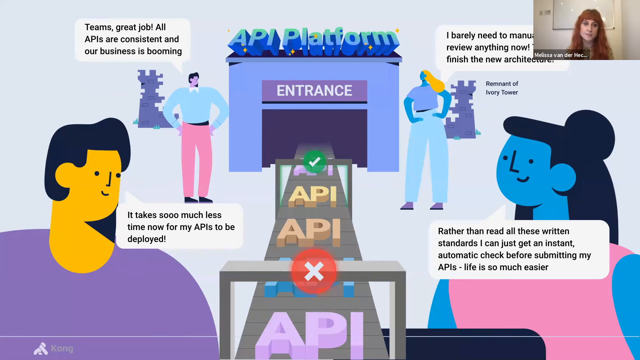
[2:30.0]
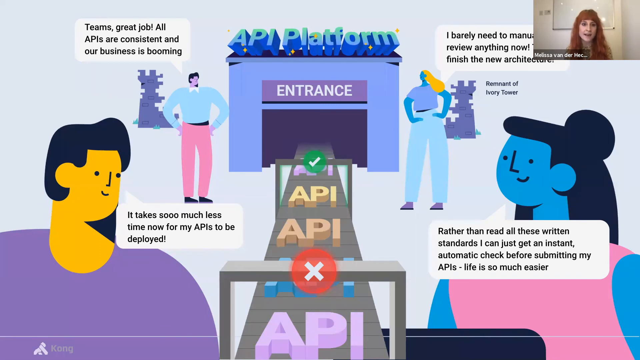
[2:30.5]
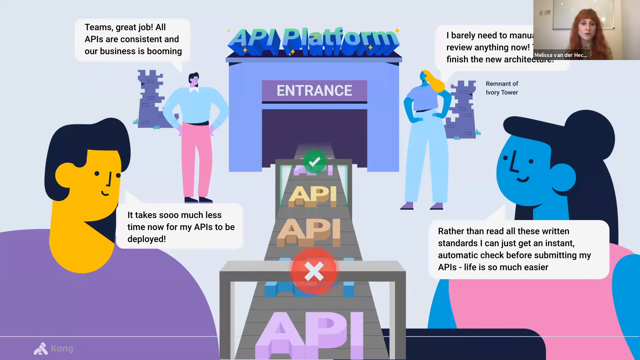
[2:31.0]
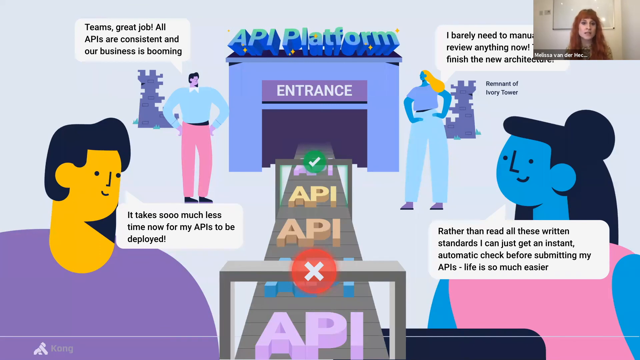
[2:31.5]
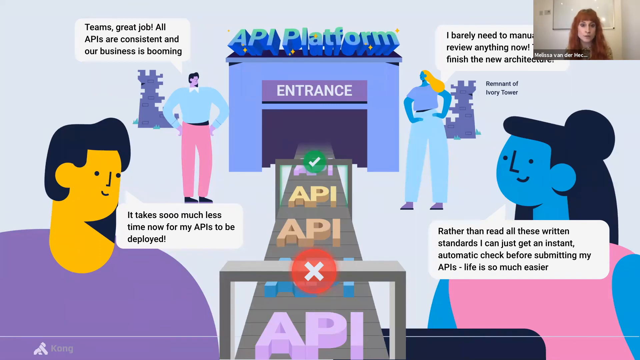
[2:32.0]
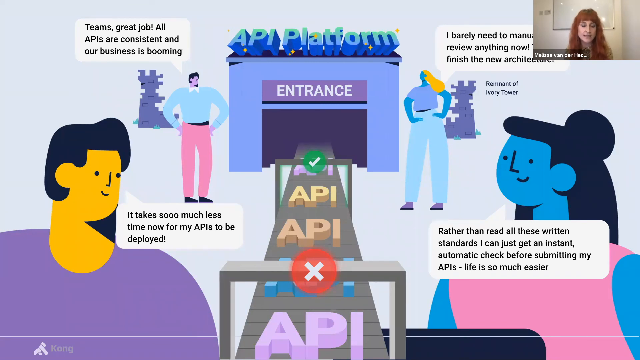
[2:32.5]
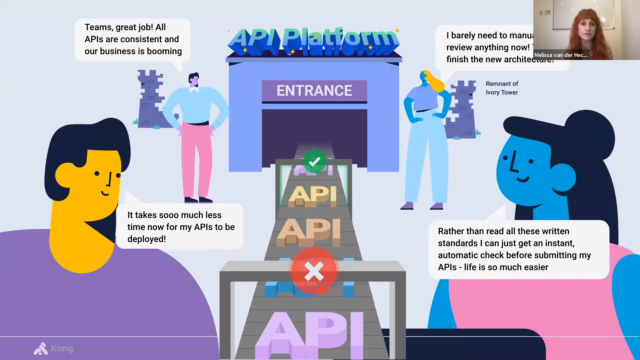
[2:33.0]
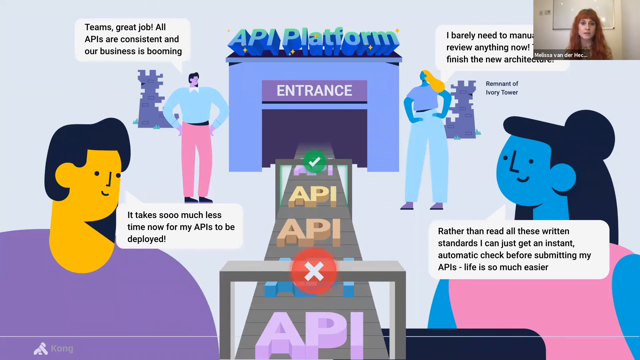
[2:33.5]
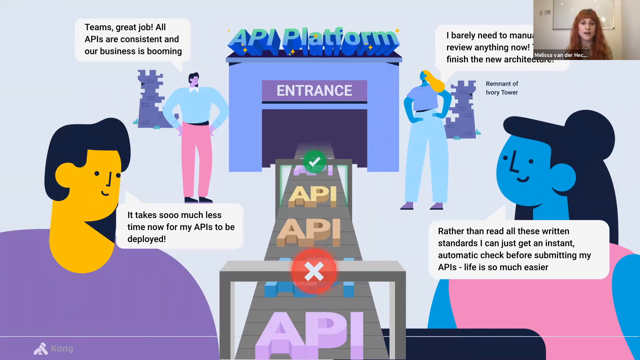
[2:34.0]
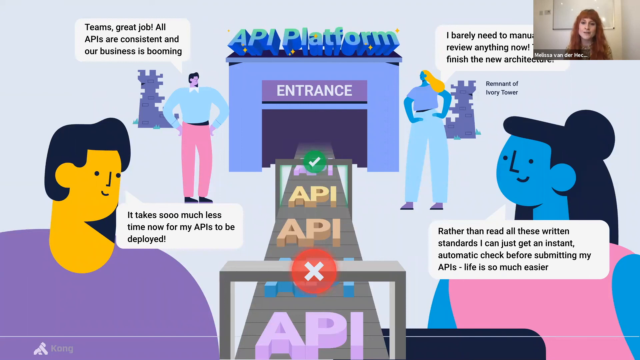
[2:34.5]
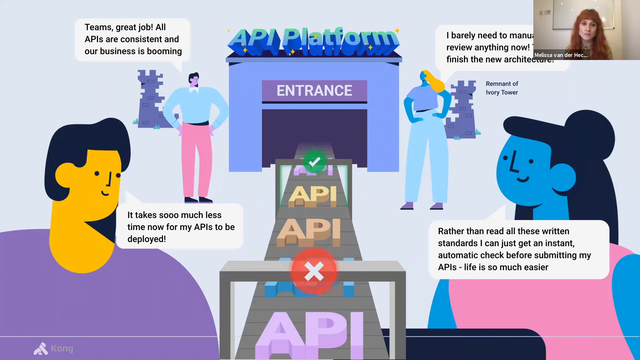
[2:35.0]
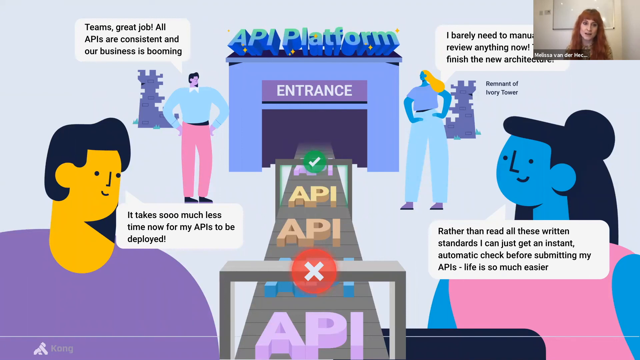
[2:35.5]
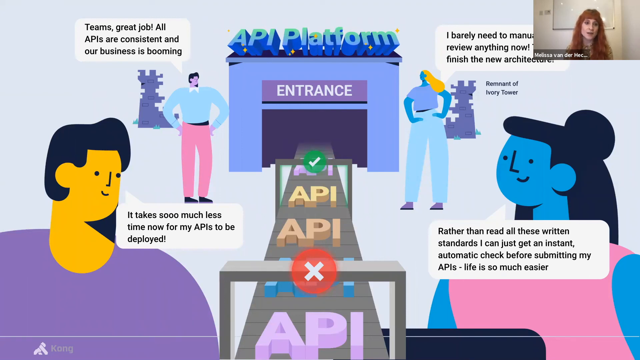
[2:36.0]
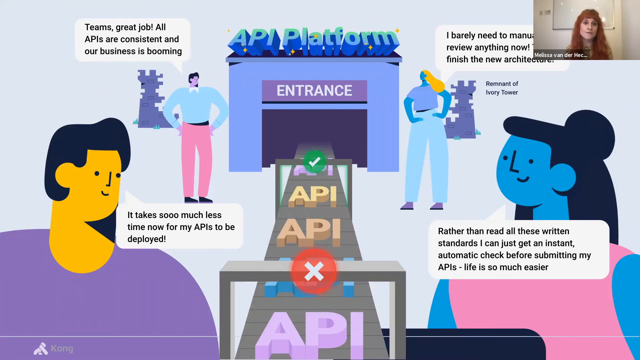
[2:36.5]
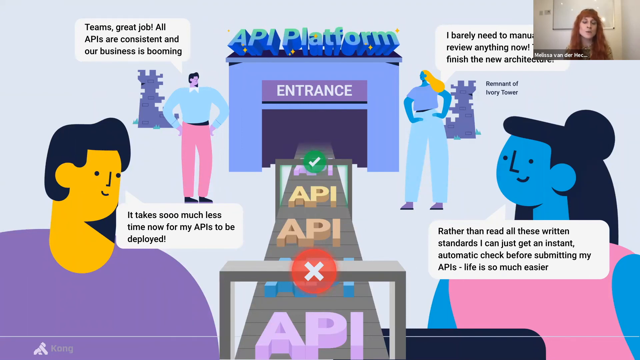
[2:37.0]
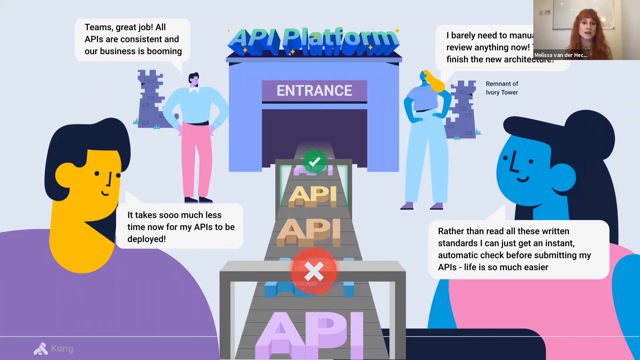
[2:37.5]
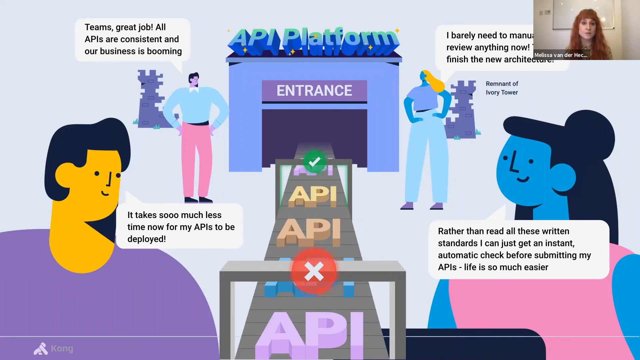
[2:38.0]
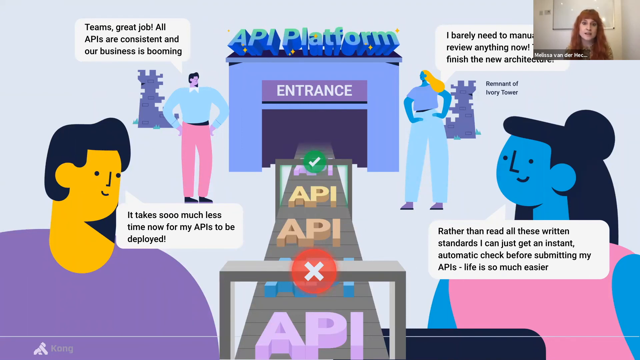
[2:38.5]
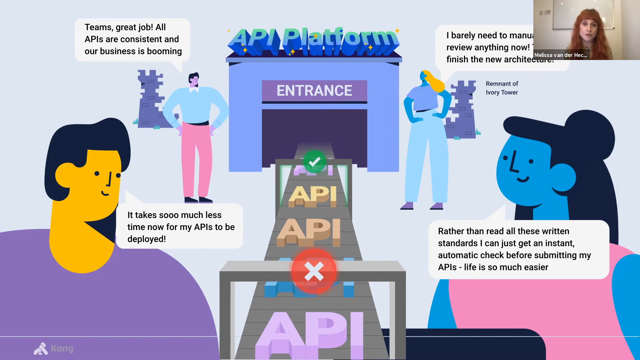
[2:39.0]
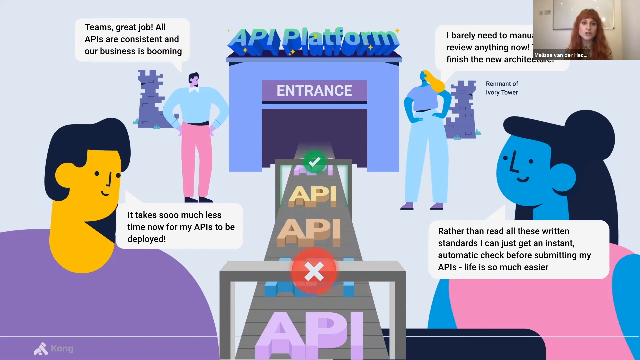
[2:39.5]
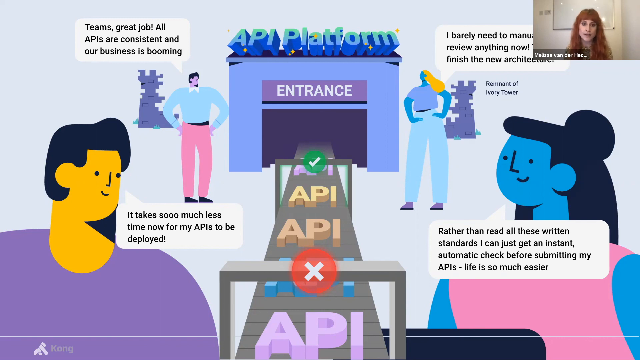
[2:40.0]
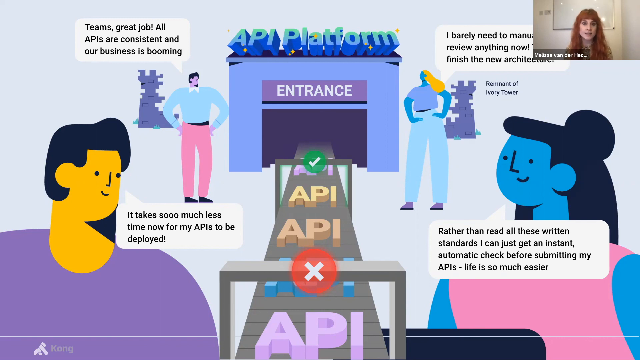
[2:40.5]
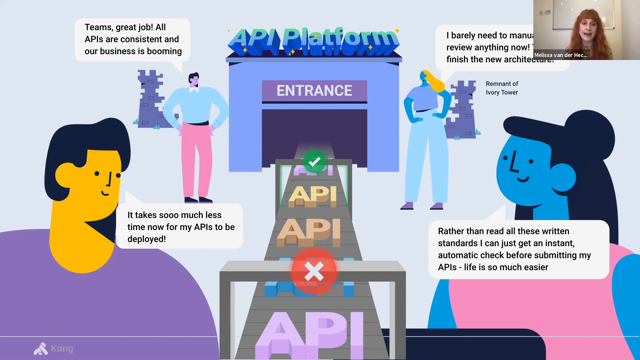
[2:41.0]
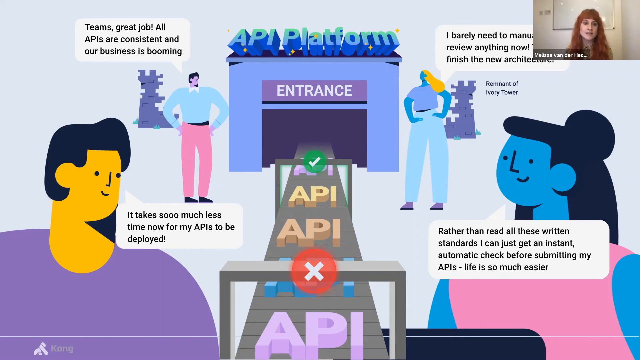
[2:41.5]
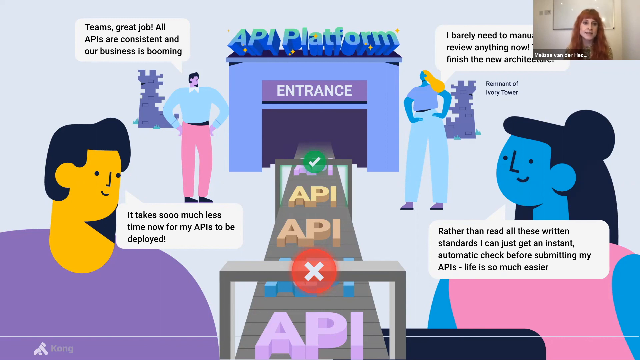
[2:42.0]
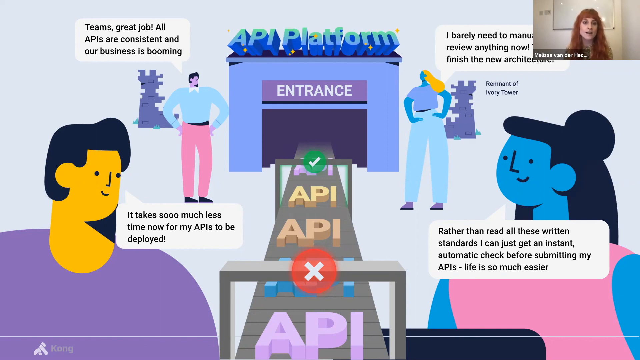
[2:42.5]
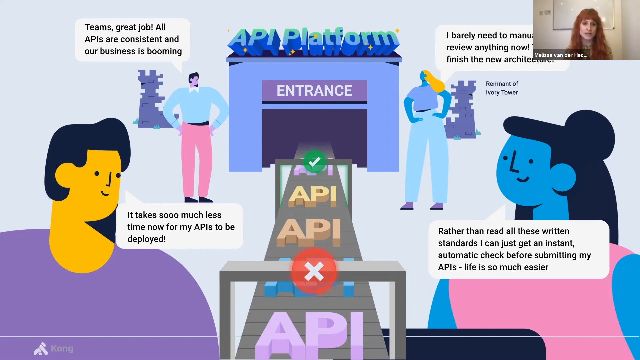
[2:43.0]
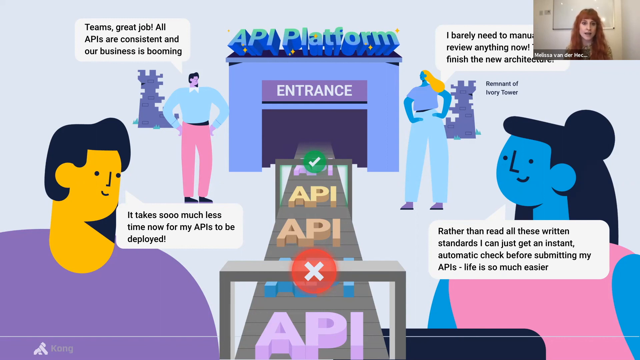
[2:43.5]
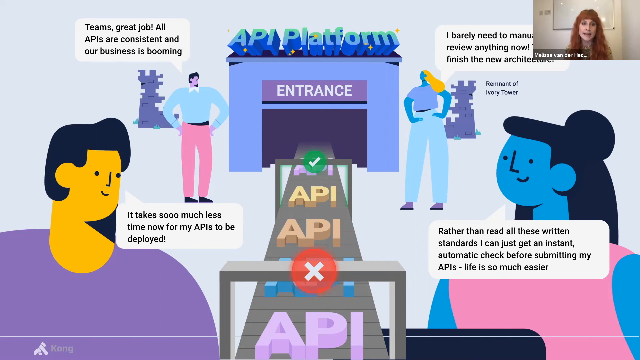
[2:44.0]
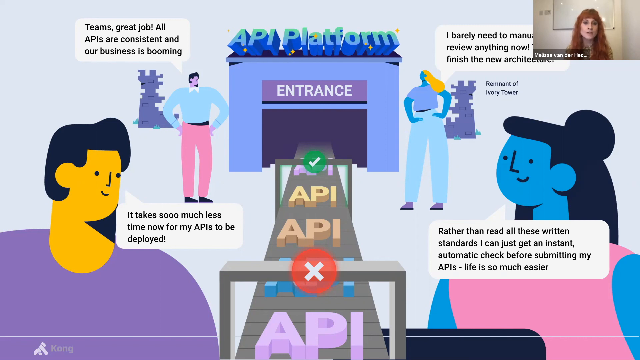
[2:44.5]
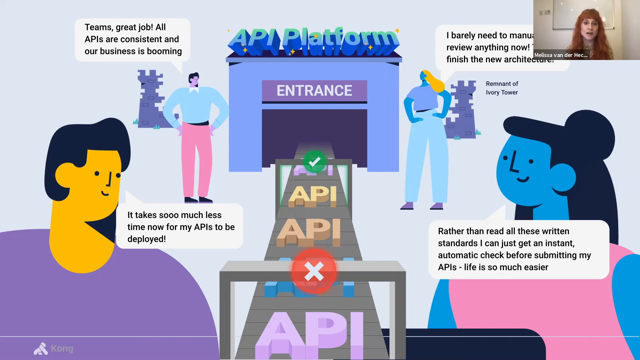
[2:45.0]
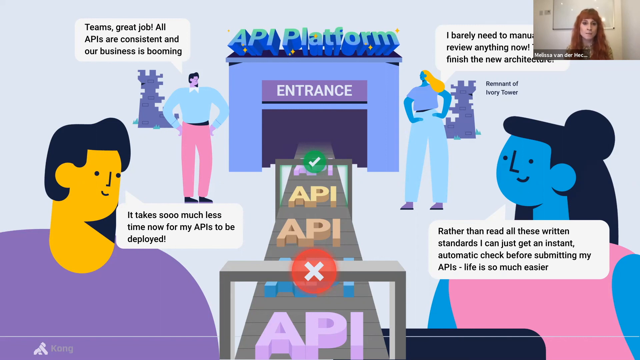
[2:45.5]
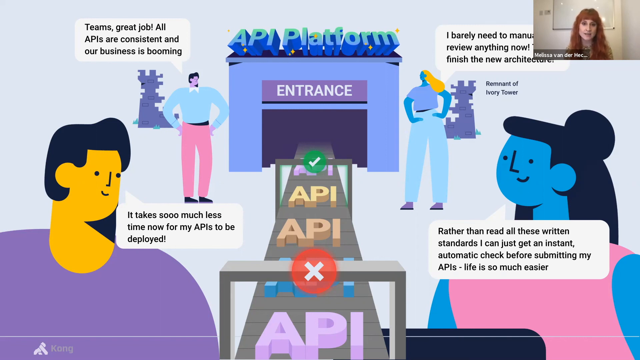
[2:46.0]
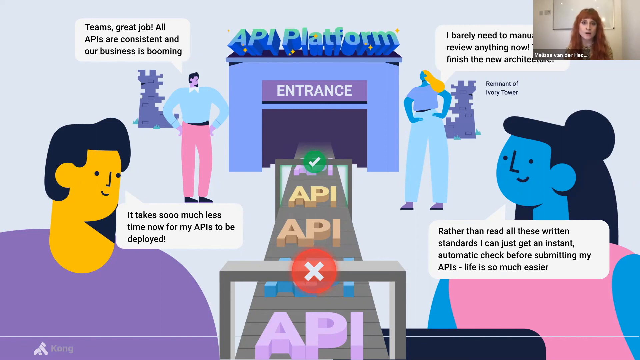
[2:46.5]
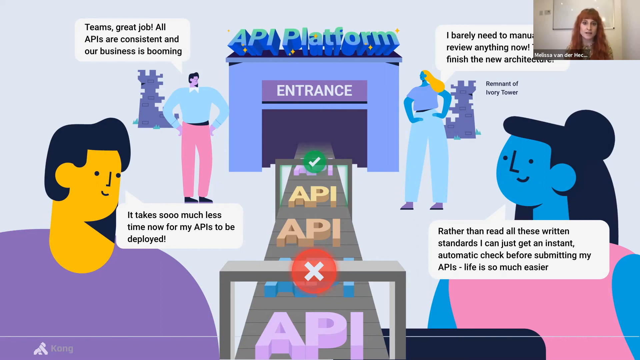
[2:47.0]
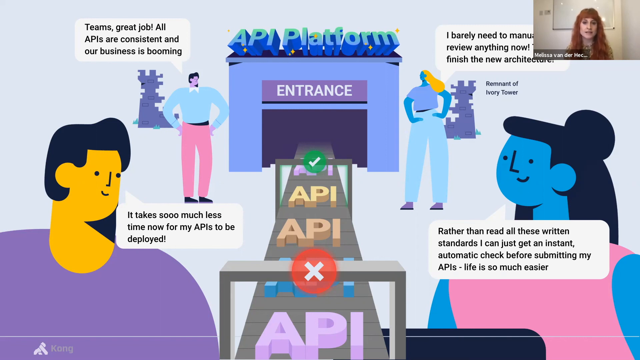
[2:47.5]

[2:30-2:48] There is not much change. The PowerPoint slide is full of vector art, mostly of people, each with a speech bubble, surrounding an assembly line illustration that seems to show APIs heading toward an API platform. The woman speaks relatively animatedly, opening her mouth pretty wide and moving a little from side to side. She is in a blank room with white walls, in front of a blank whiteboard, and has red wavy hair. She never gestures with her hands, and her hands and arms are never visible in the frame. The slide does not change for the rest of the video. Her room is relatively well lit, but the lighting seems a bit yellow.